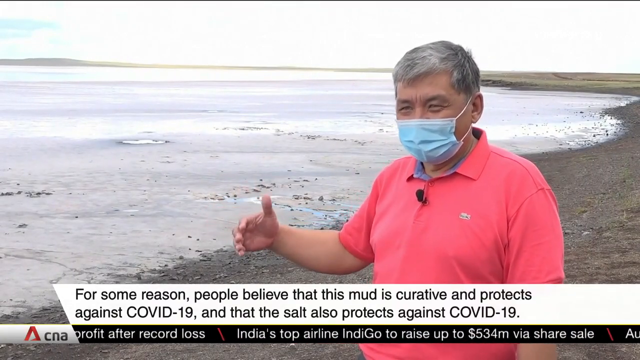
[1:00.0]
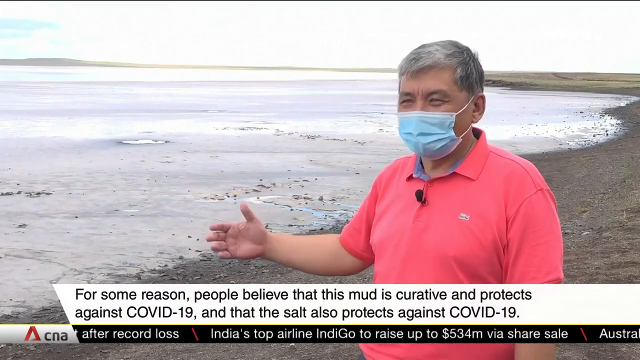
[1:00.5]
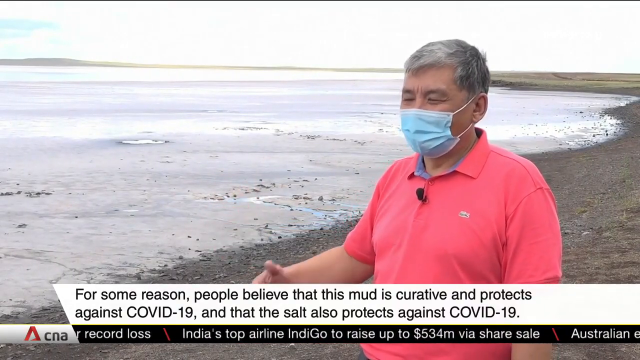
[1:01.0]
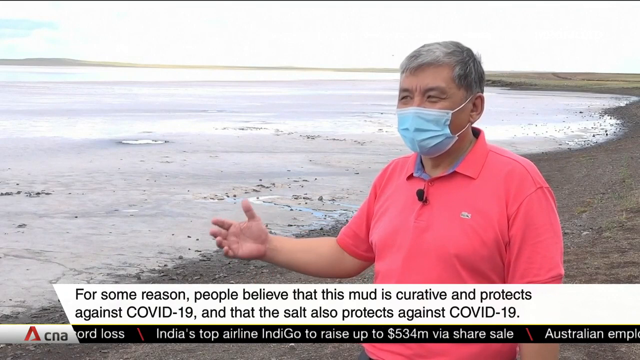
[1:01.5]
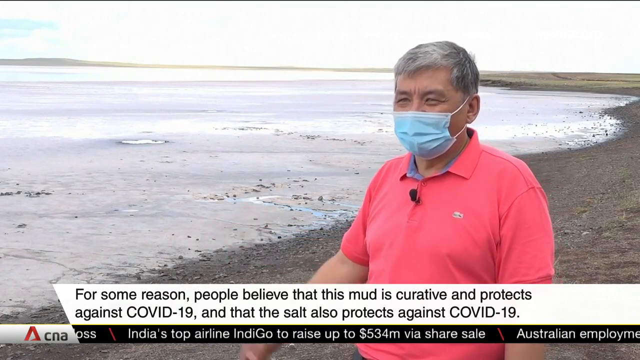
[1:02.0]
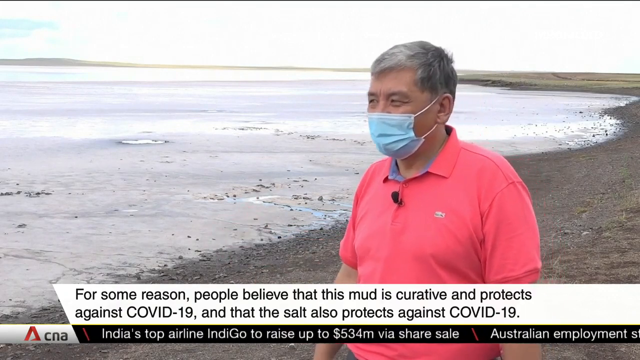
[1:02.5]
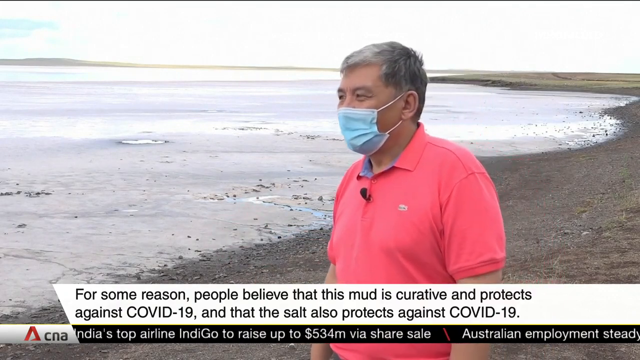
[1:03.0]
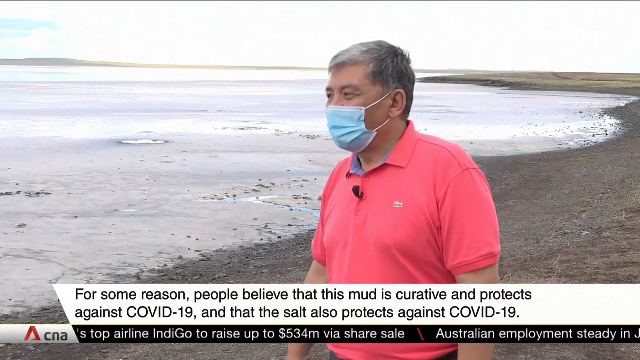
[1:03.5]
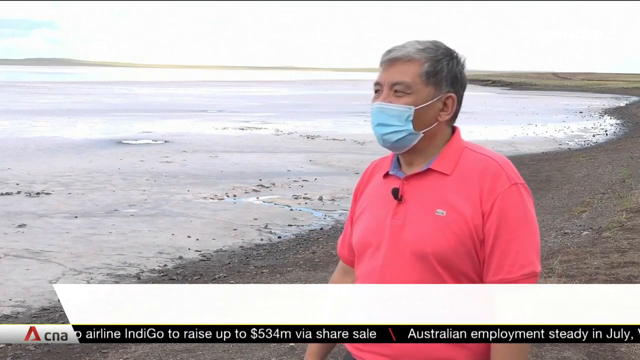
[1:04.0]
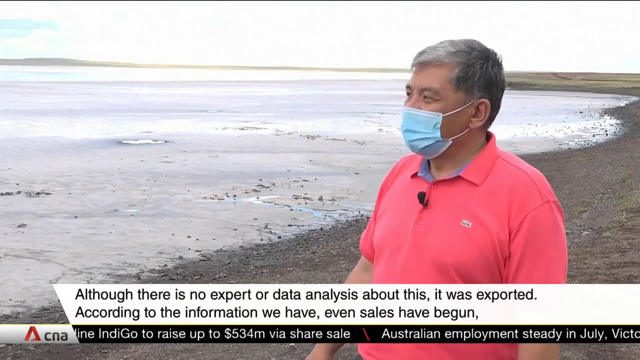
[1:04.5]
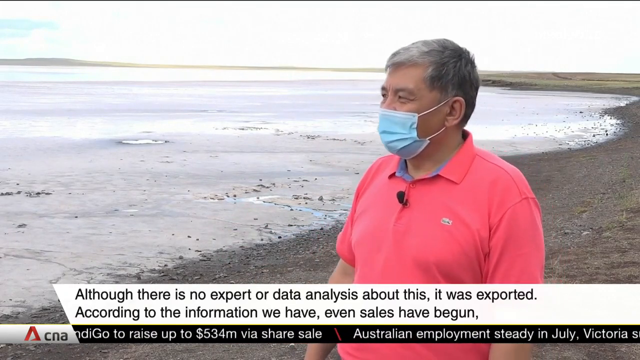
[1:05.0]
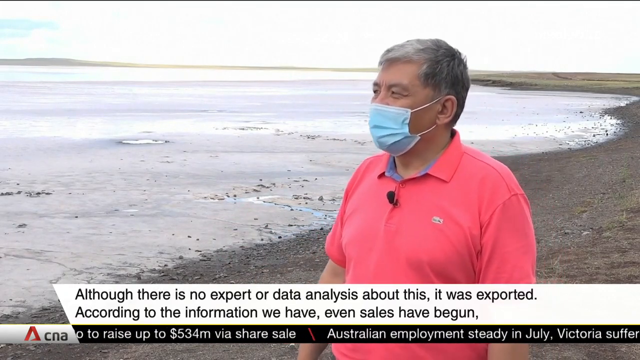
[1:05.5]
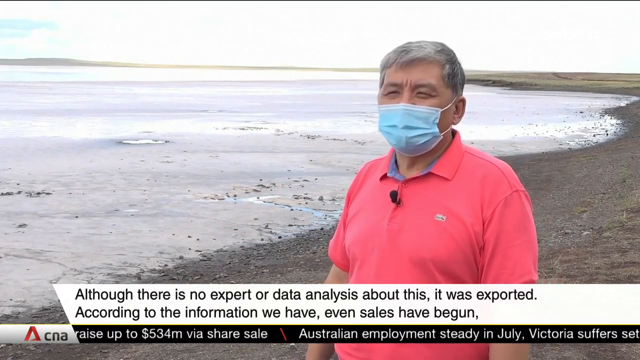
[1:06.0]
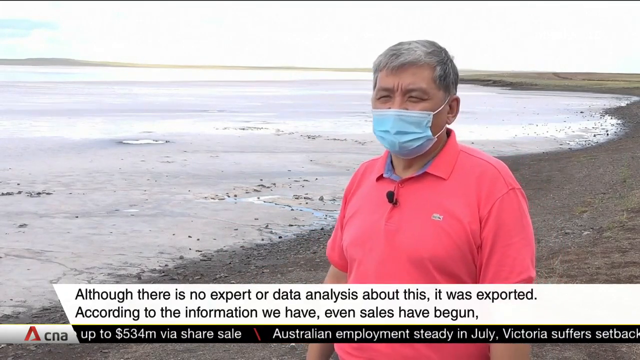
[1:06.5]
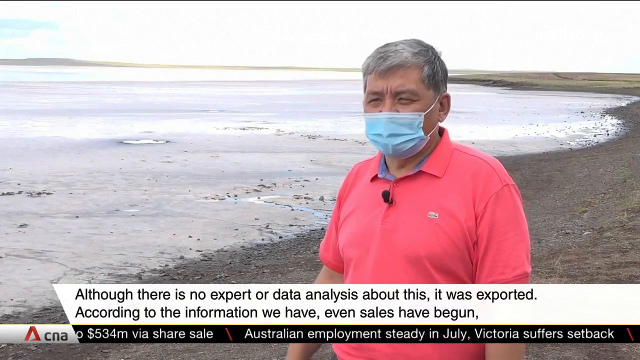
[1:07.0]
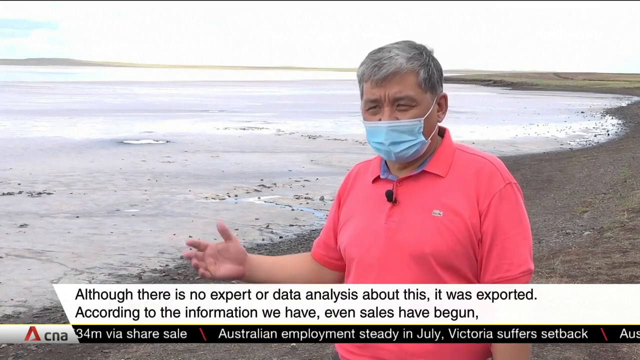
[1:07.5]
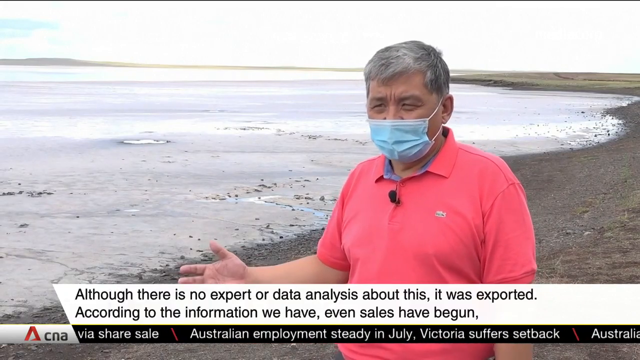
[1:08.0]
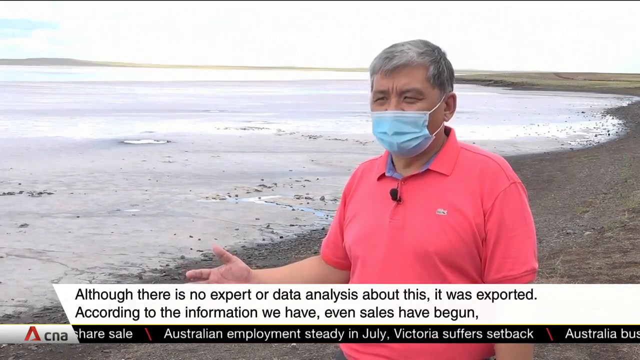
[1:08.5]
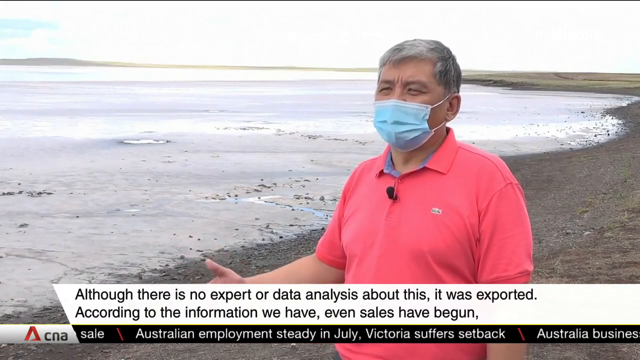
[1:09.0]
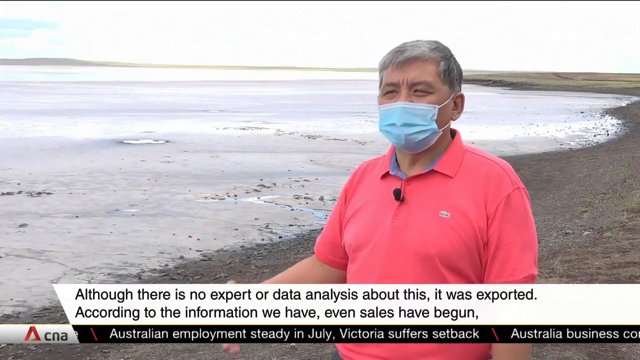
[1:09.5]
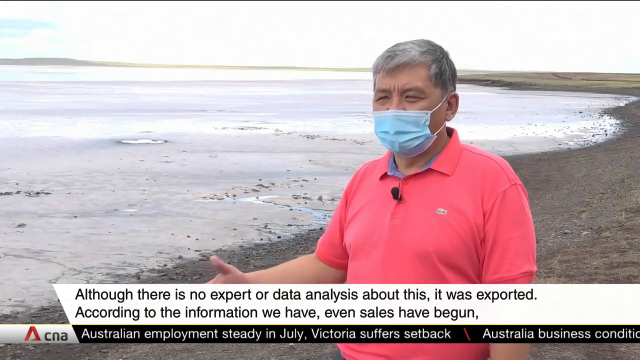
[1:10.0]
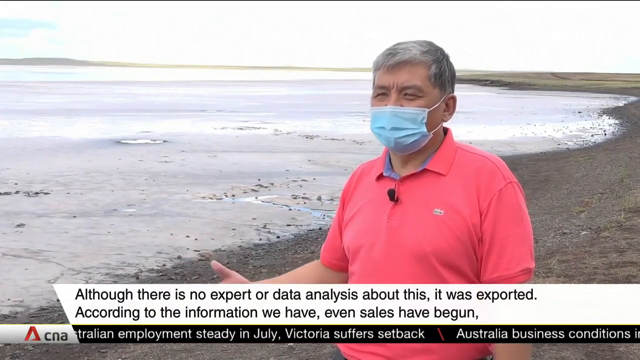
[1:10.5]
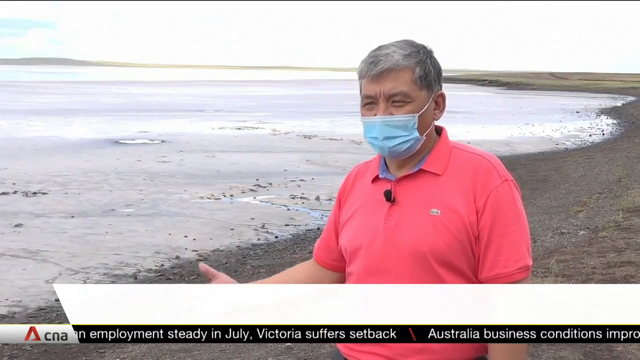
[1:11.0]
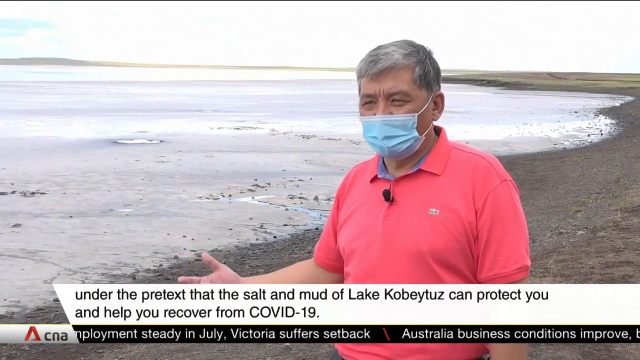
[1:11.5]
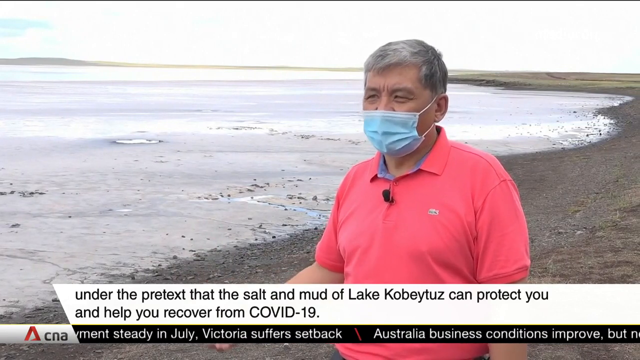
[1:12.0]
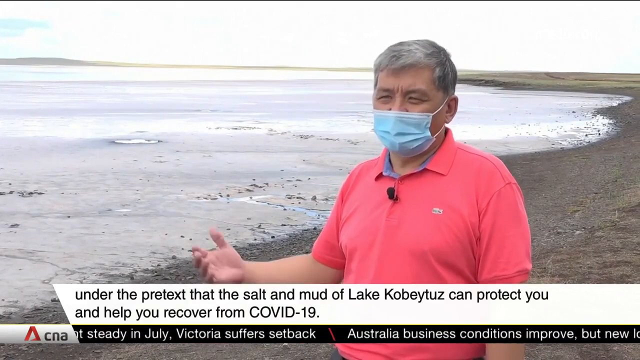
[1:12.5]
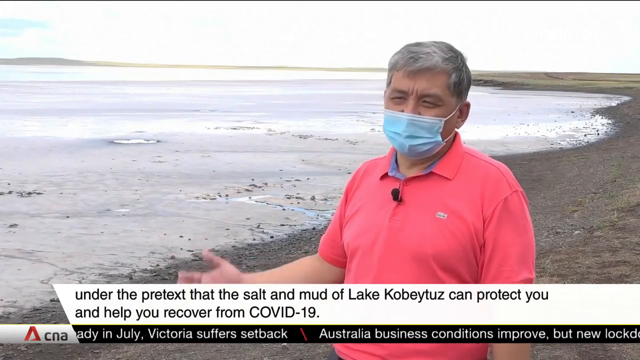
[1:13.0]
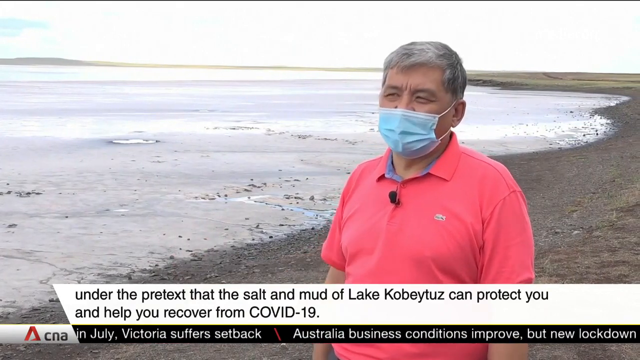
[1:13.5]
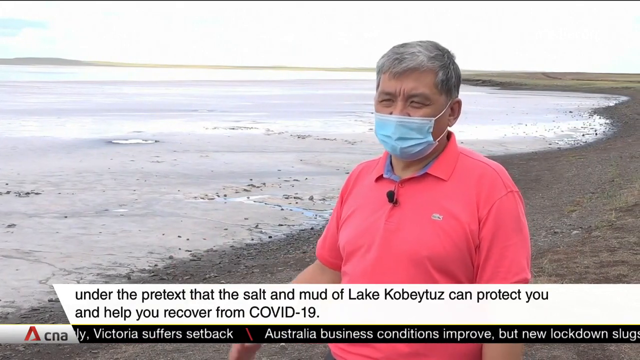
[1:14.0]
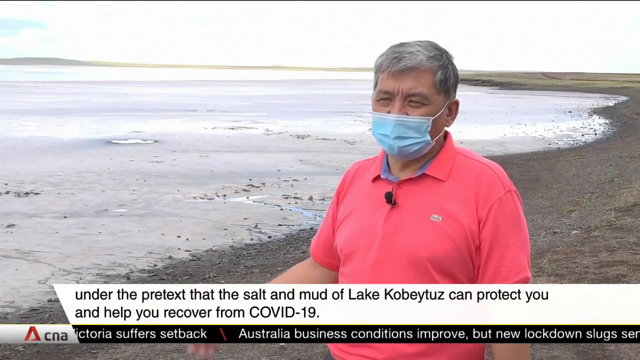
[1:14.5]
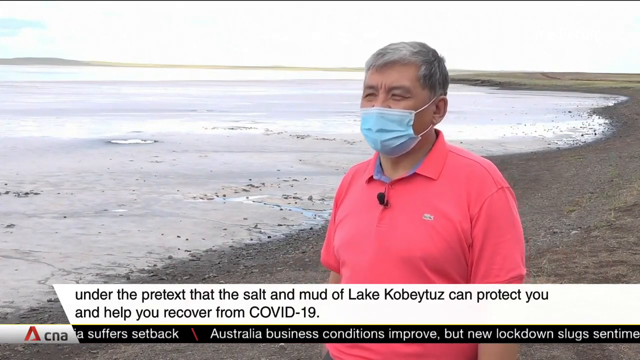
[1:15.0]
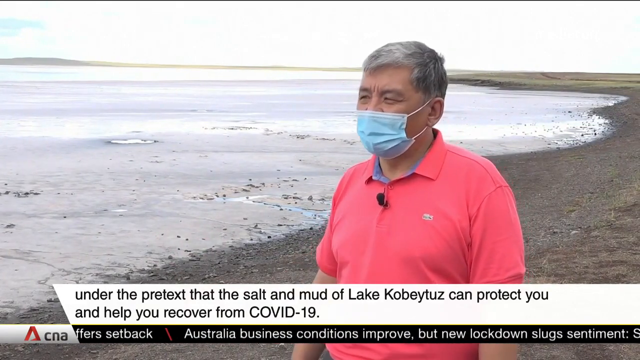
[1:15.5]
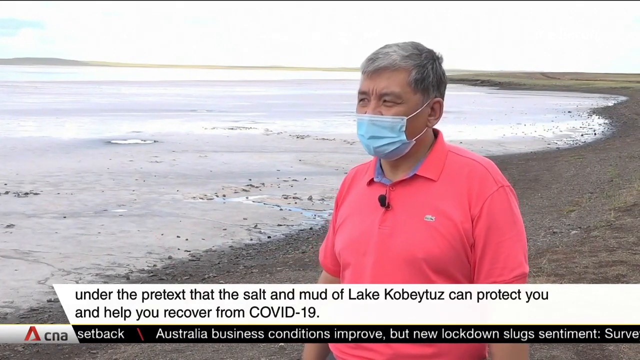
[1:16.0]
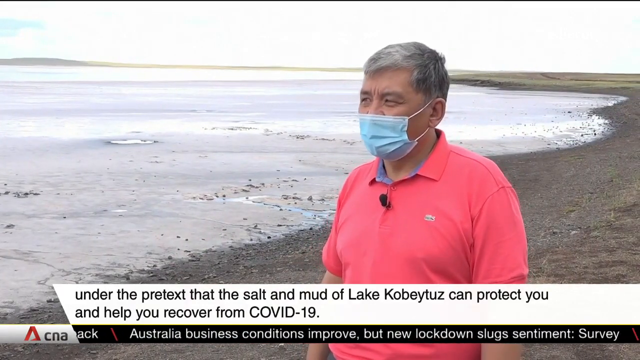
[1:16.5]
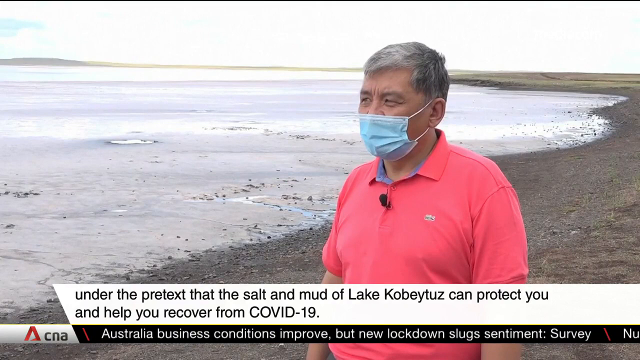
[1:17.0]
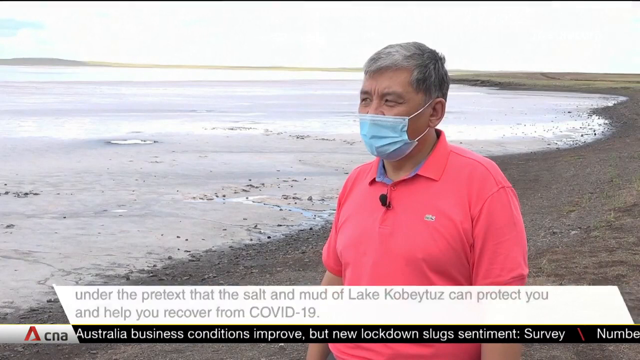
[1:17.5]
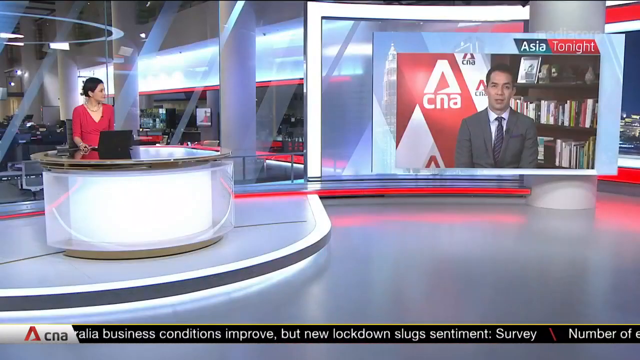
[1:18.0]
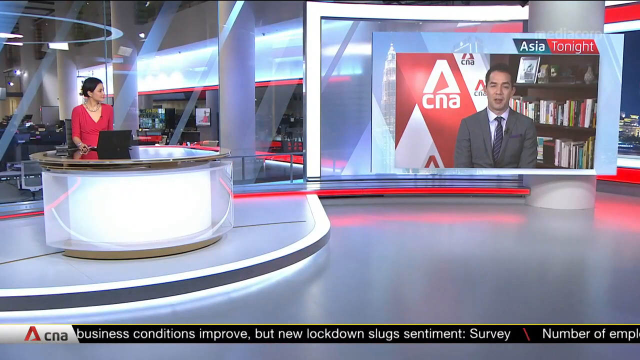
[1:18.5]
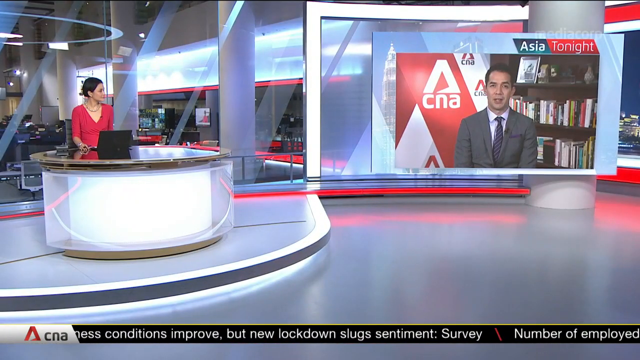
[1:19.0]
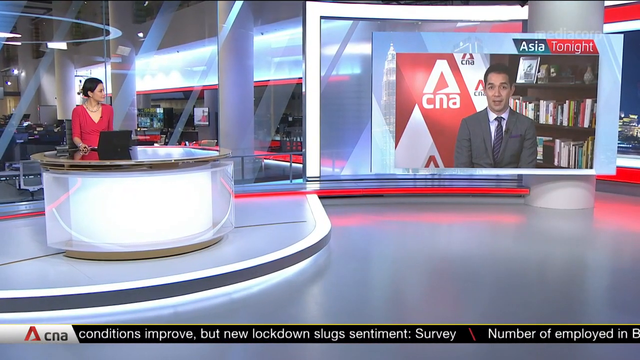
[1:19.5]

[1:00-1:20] The interview with the man resumes, and his words are translated in a white banner at the bottom of the screen: "for some reason, people believe that this mud is curative and protects against COVID-19, and that the salt also protects against COVID-19." The translation continues: "Although there is no expert or data analysis about this, it was exported. According to the information we have, even sales have begun under the pretext that the salt and mud of Lake Kobeytuz can protect and help you recover from COVID-19."